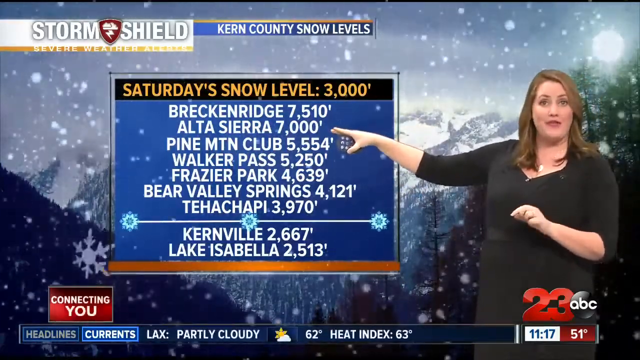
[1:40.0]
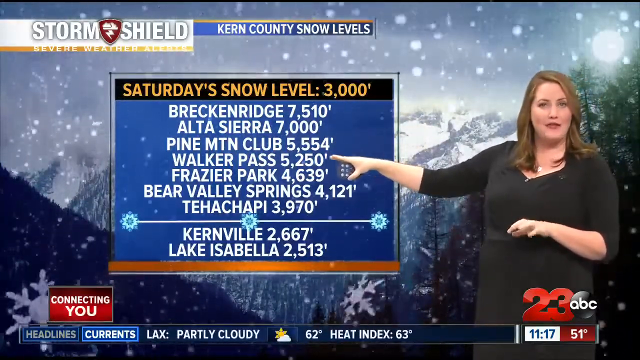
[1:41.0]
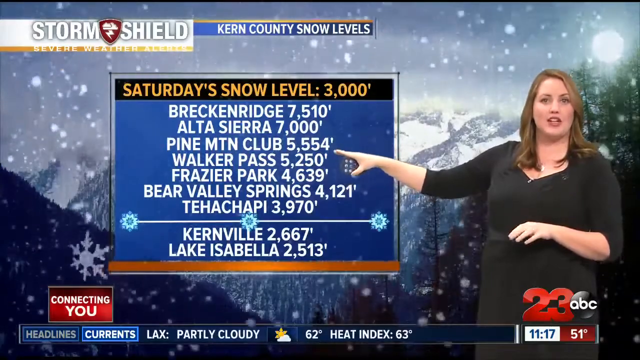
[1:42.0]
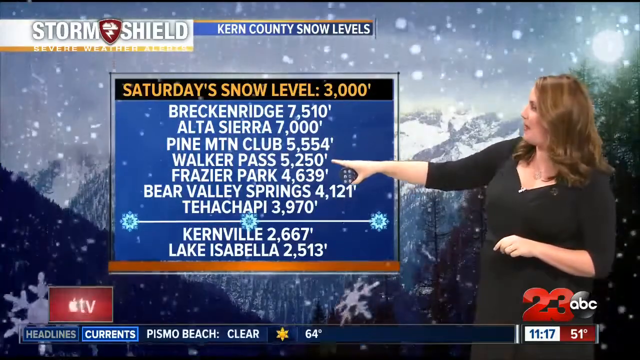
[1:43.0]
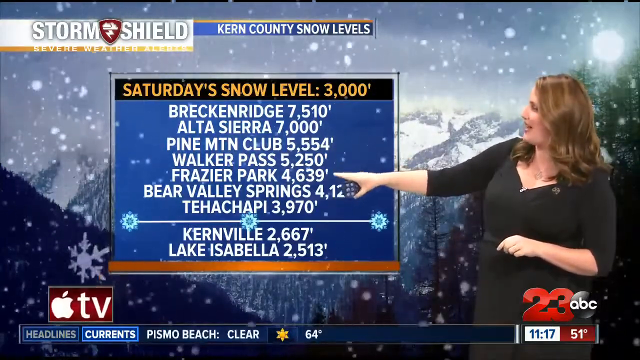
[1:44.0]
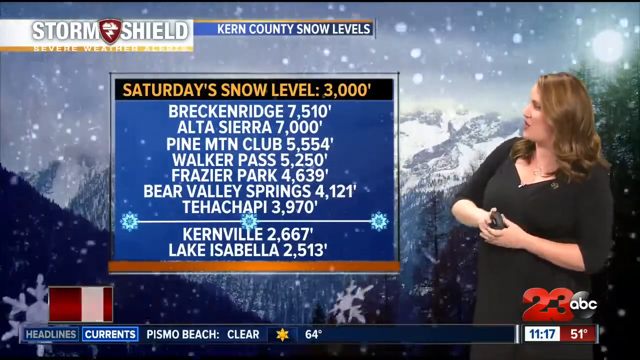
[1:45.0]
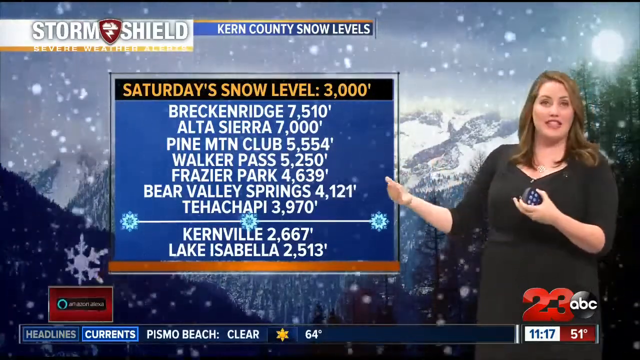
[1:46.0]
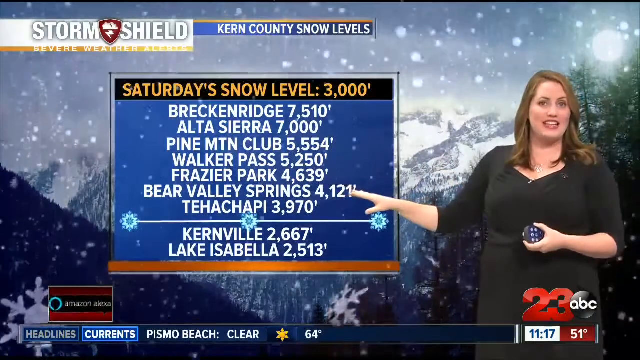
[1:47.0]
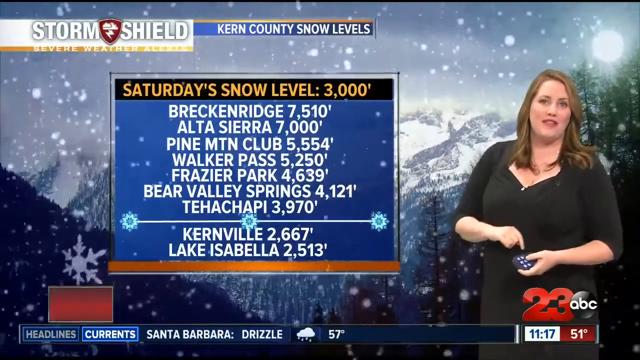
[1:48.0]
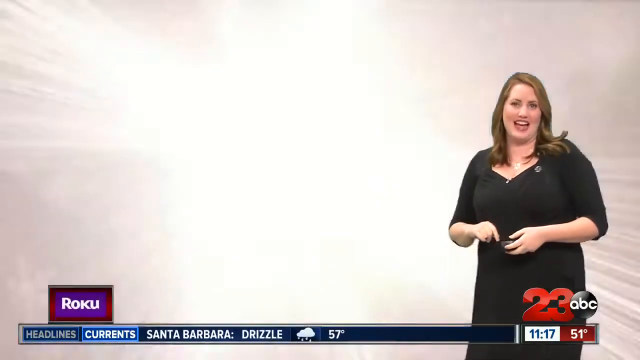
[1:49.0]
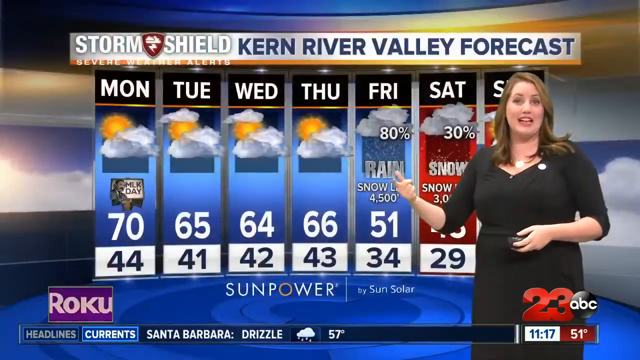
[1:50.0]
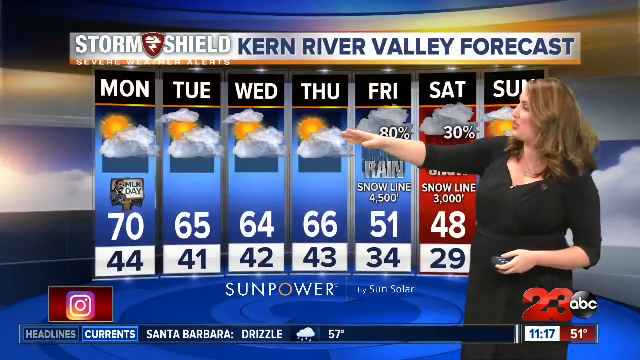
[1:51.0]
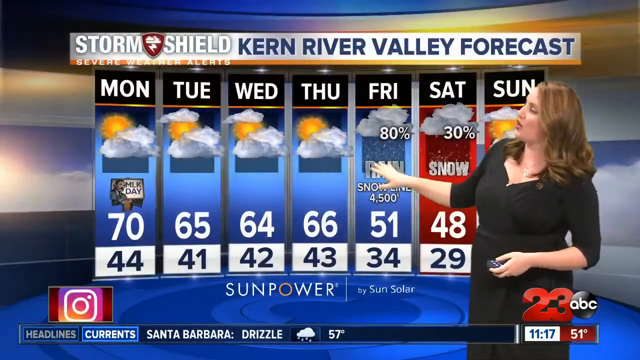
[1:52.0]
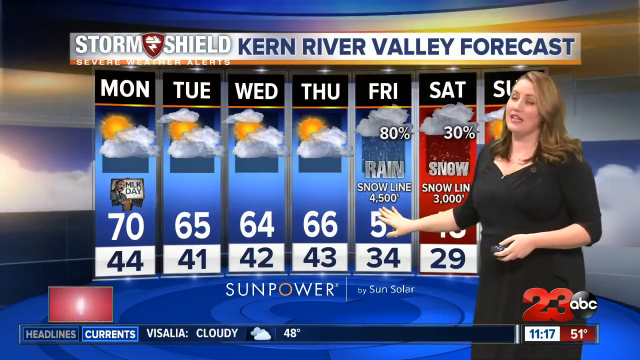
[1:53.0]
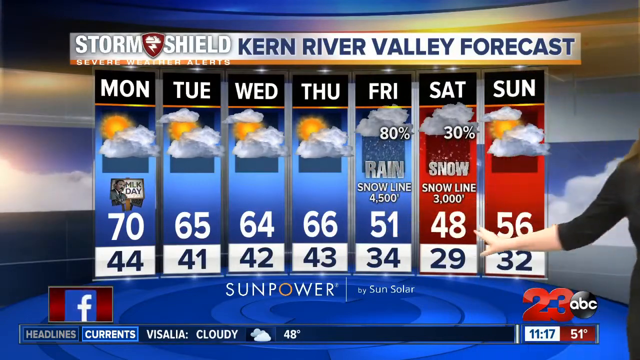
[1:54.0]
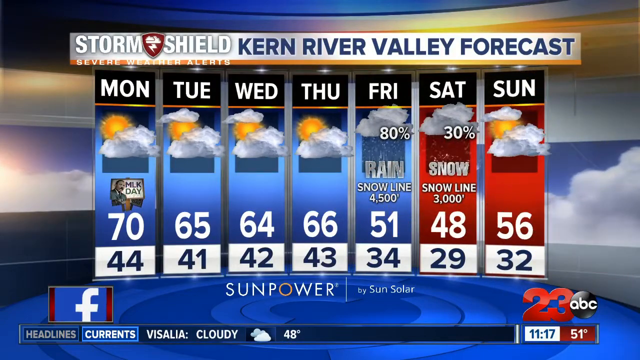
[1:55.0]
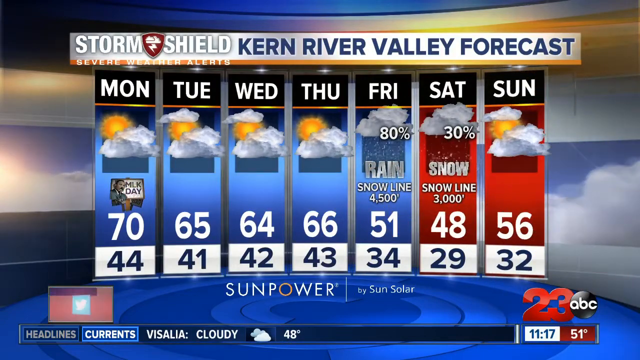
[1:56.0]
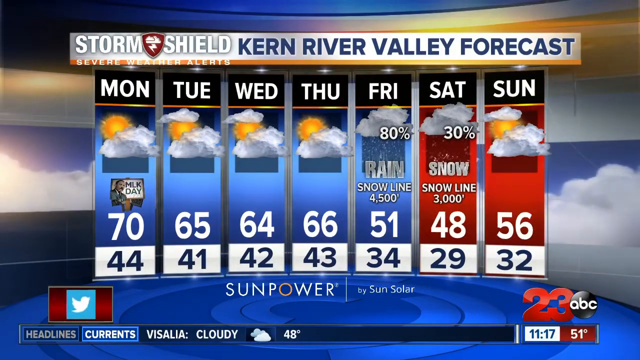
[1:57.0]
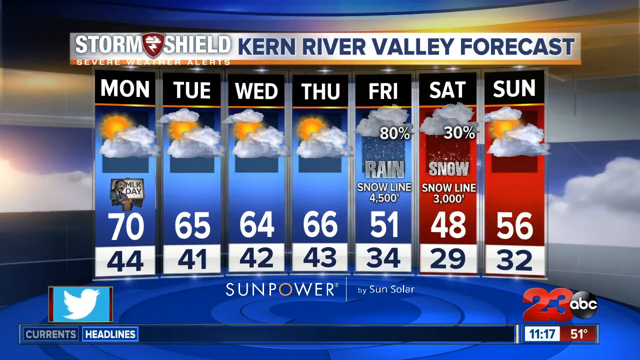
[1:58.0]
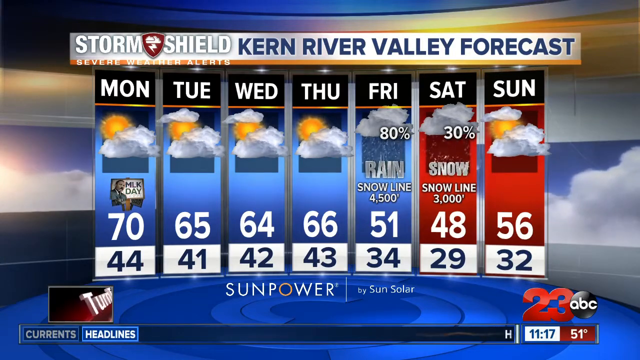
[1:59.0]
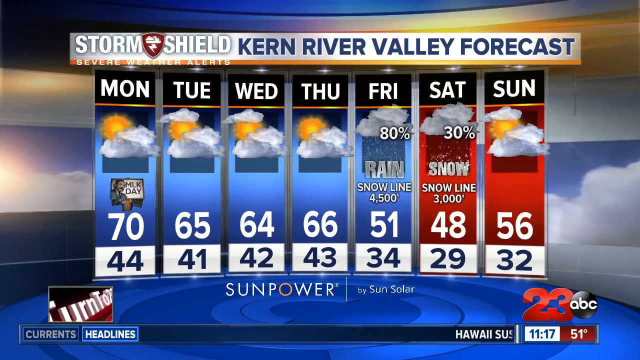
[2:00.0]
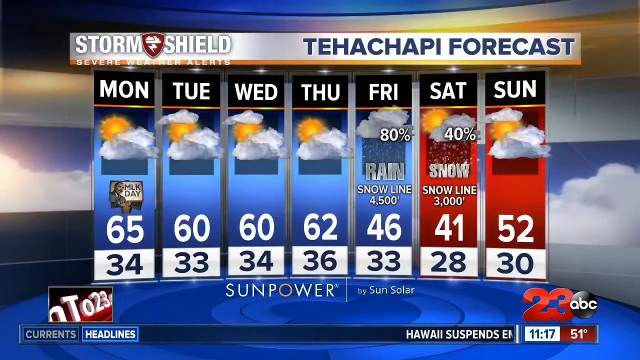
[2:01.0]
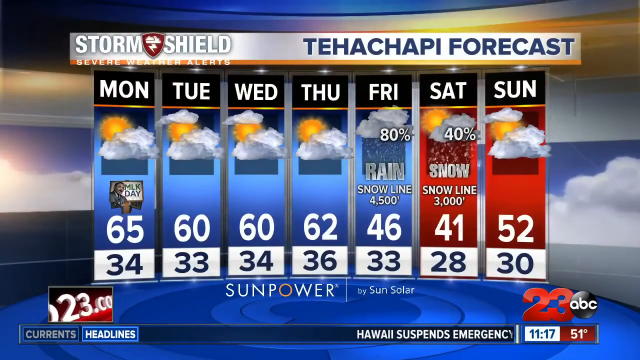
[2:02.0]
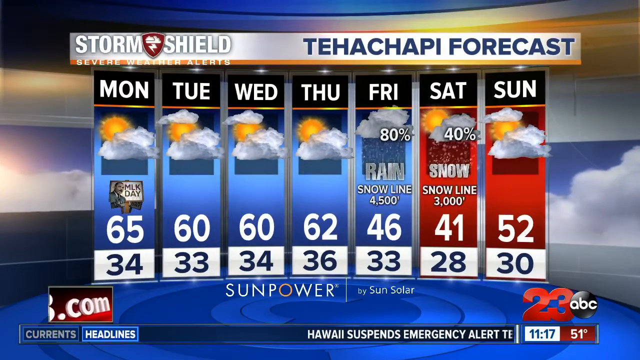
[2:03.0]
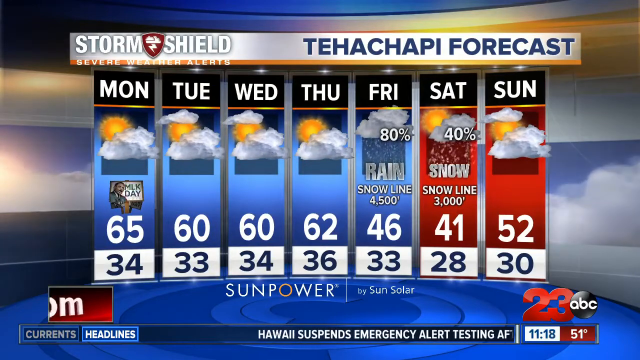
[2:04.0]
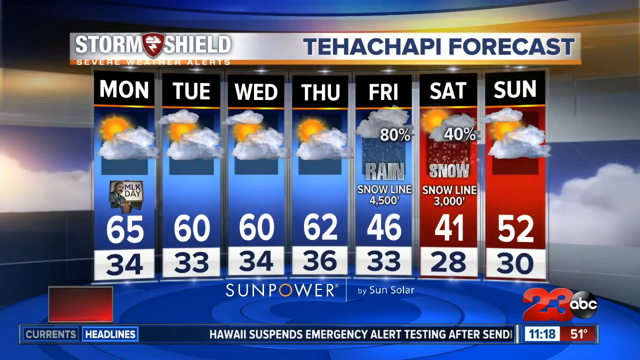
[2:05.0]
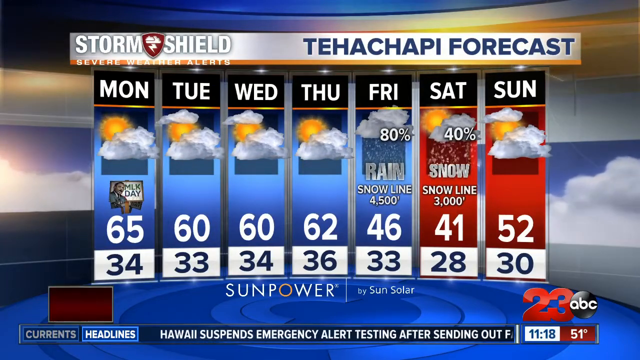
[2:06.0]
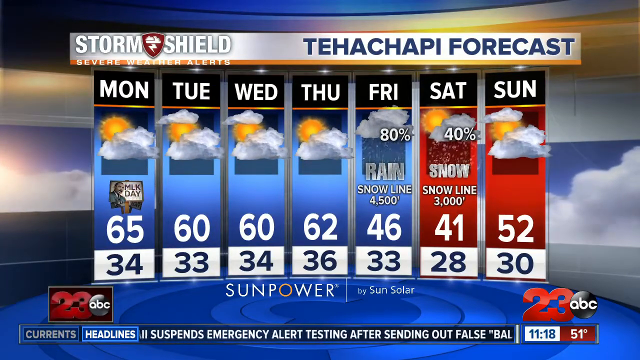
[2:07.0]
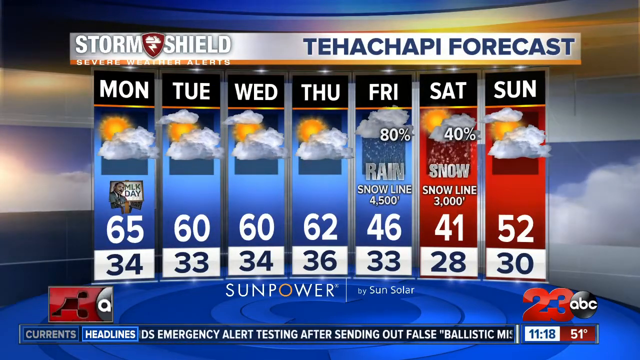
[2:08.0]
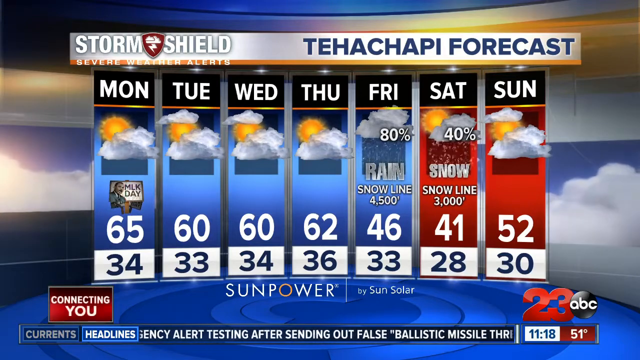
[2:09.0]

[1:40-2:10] In the ABC News Channel 23 meteorology report, the woman shows the snow levels expected at a list of places including Breckenridge, Alta Sierra, Pine Mountain, Walker Pass, Fraser Park, Bear Valley Springs, Tehachapi, Kernville, and Lake Isabella. The snow levels appear inside a rectangular box, and behind it snowflakes come down, superimposed over a picture of a snow-covered mountain range. The display then suddenly switches to the Kern River Valley forecast.